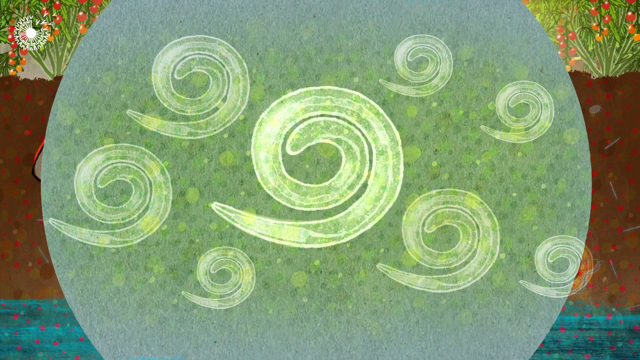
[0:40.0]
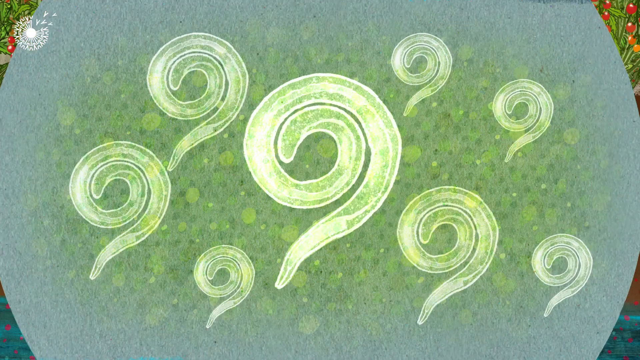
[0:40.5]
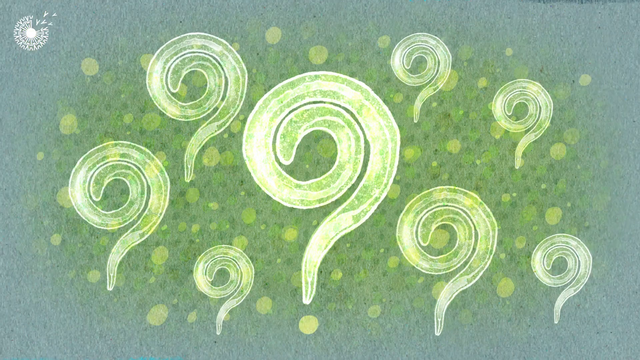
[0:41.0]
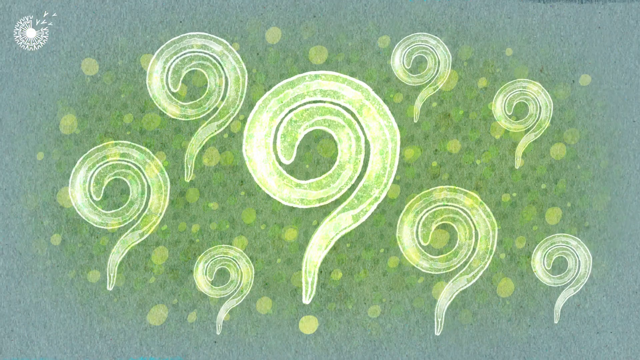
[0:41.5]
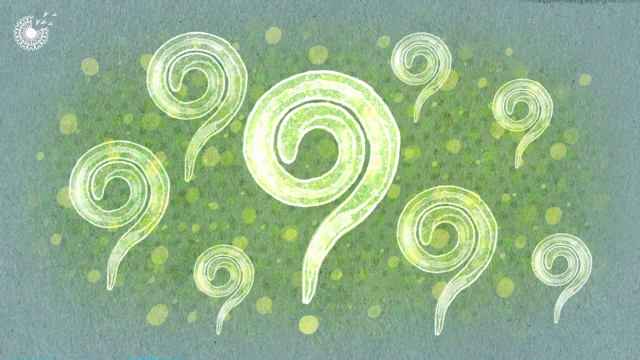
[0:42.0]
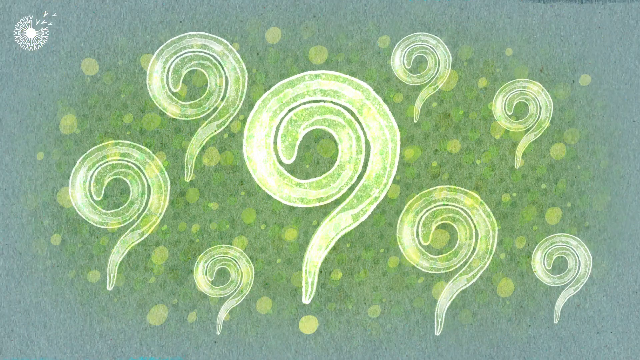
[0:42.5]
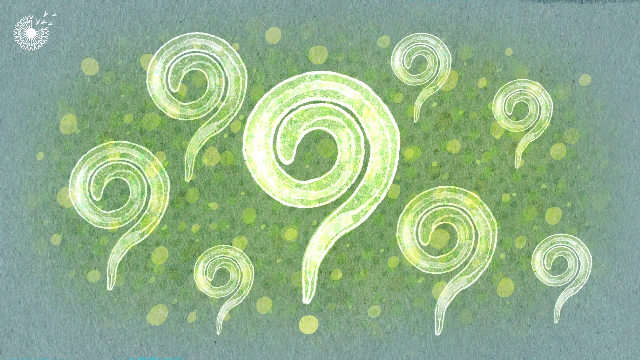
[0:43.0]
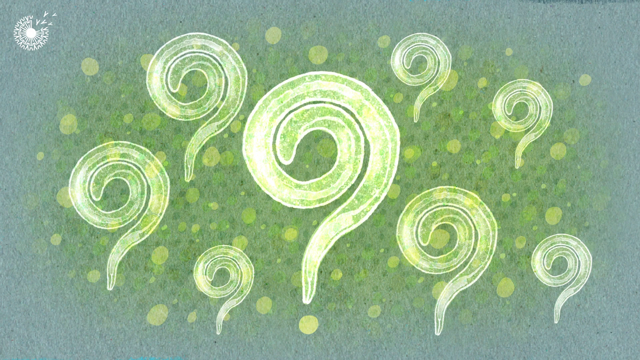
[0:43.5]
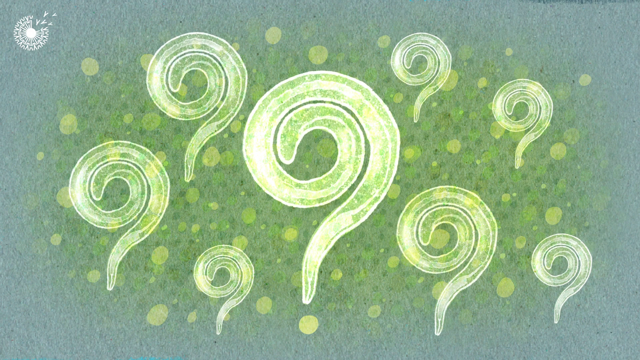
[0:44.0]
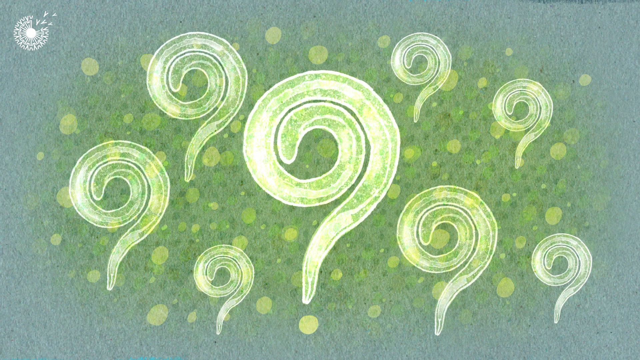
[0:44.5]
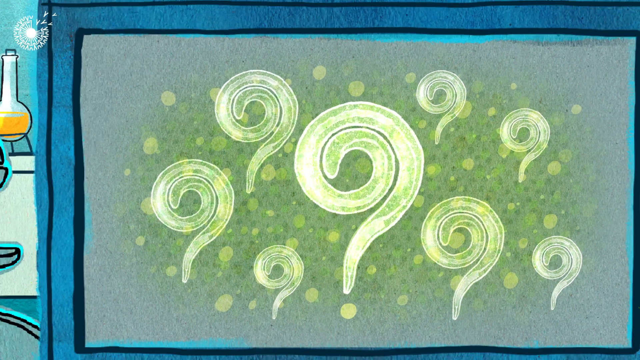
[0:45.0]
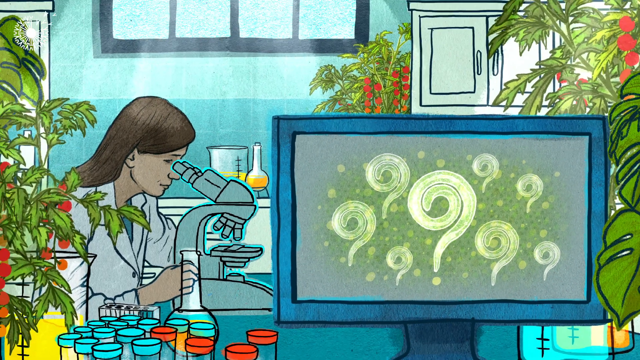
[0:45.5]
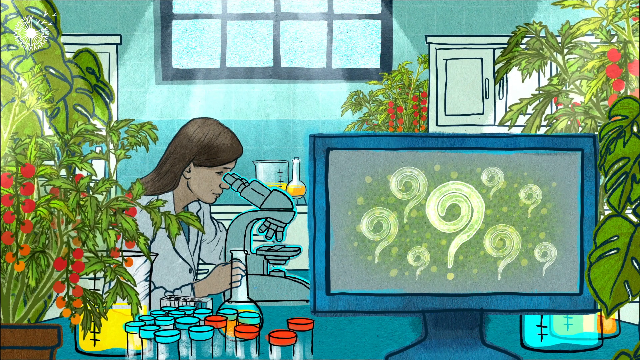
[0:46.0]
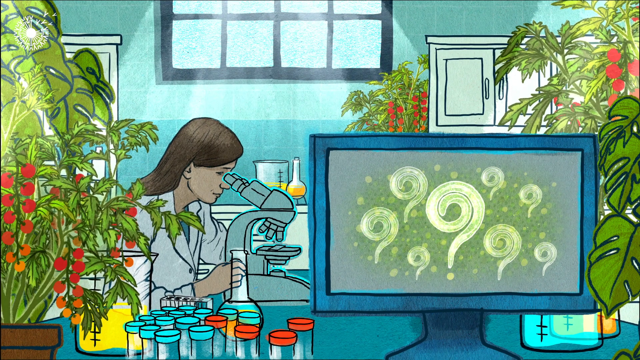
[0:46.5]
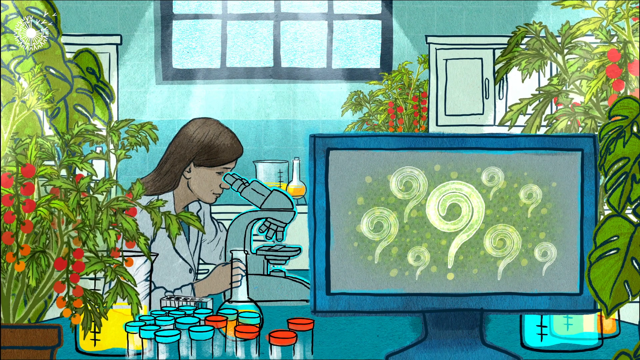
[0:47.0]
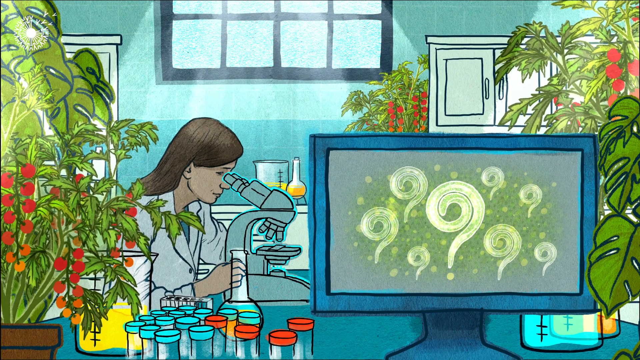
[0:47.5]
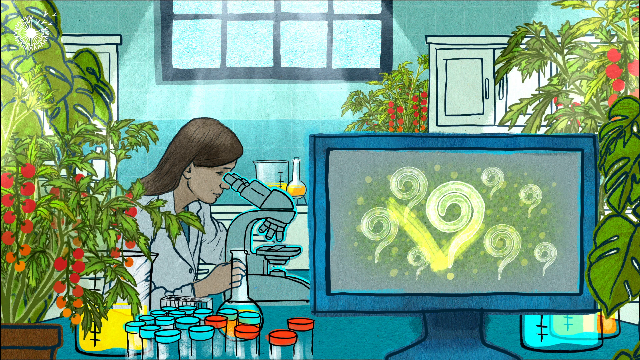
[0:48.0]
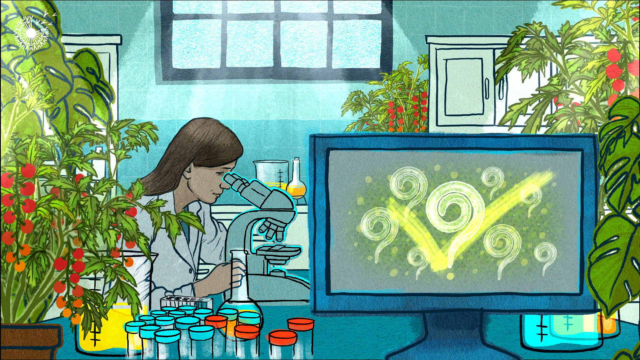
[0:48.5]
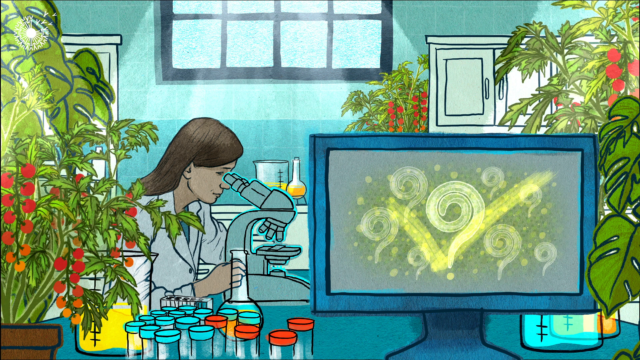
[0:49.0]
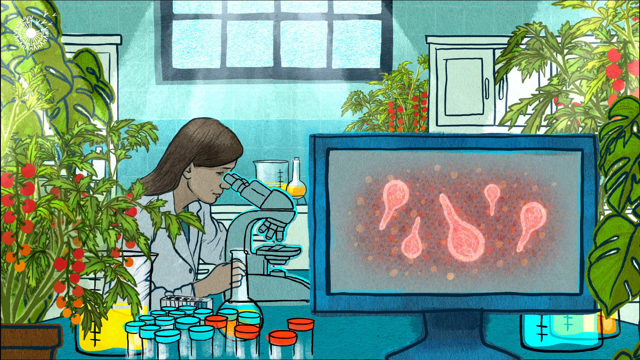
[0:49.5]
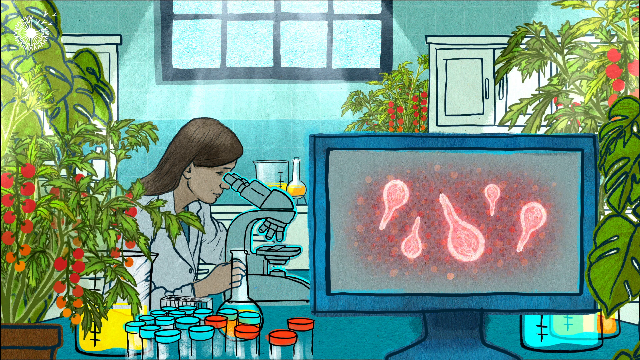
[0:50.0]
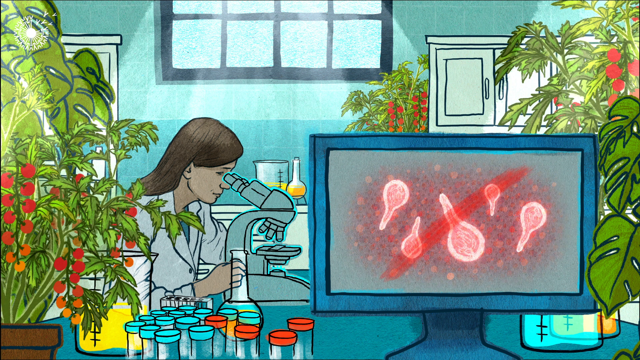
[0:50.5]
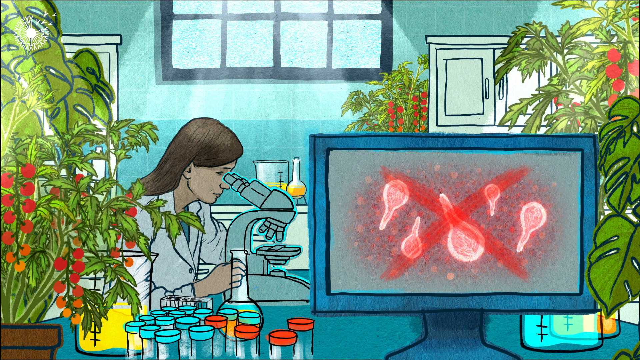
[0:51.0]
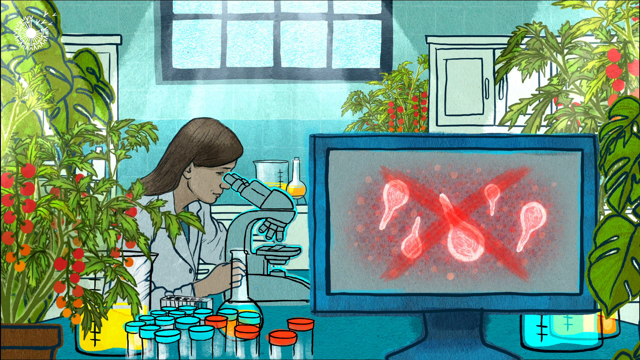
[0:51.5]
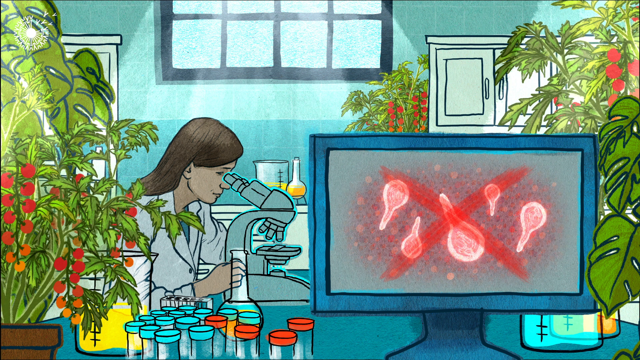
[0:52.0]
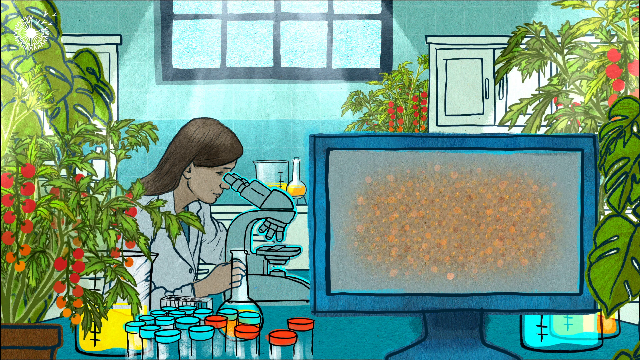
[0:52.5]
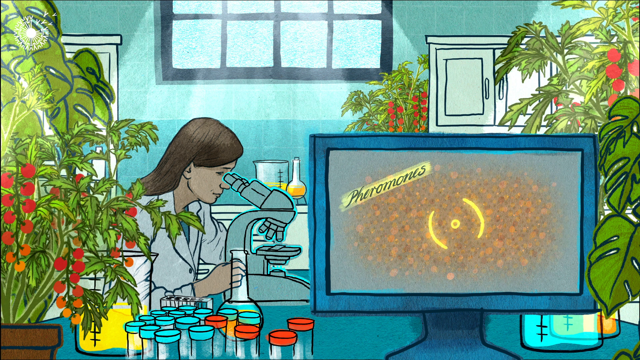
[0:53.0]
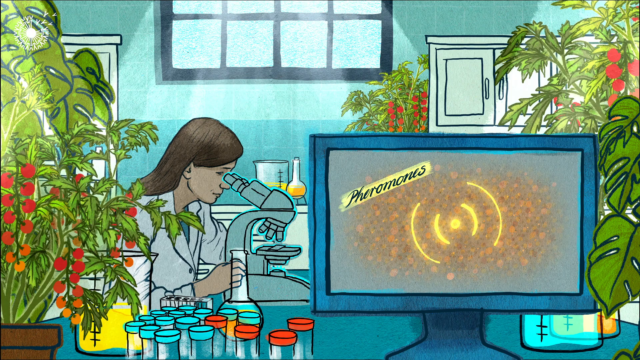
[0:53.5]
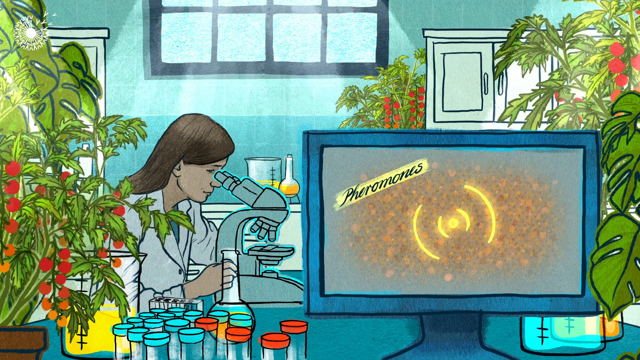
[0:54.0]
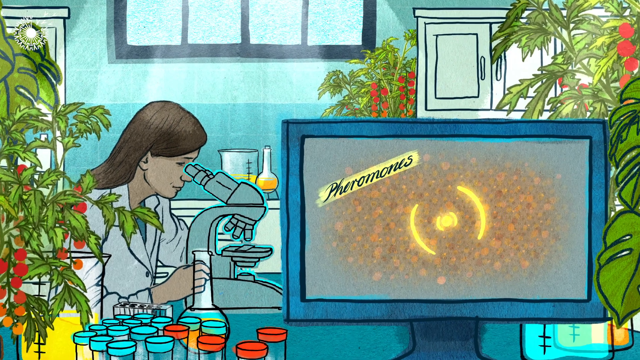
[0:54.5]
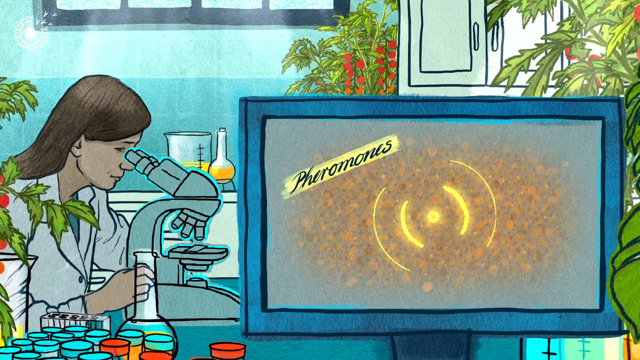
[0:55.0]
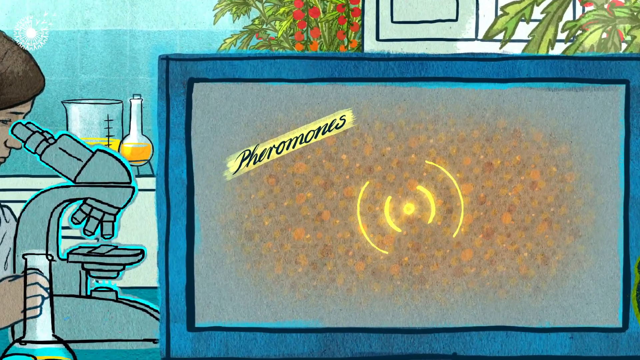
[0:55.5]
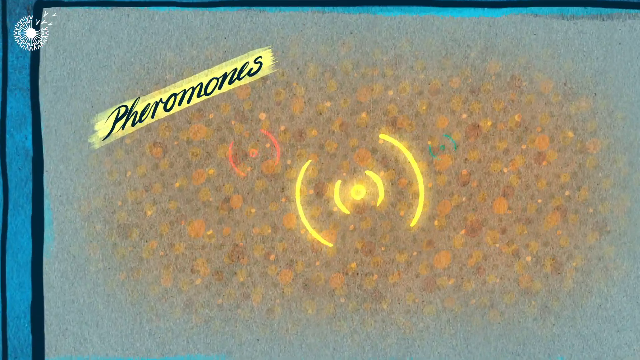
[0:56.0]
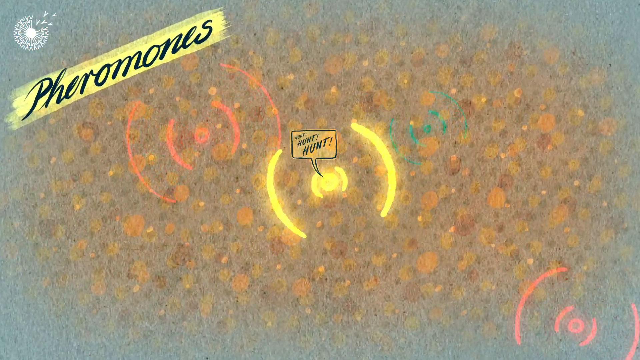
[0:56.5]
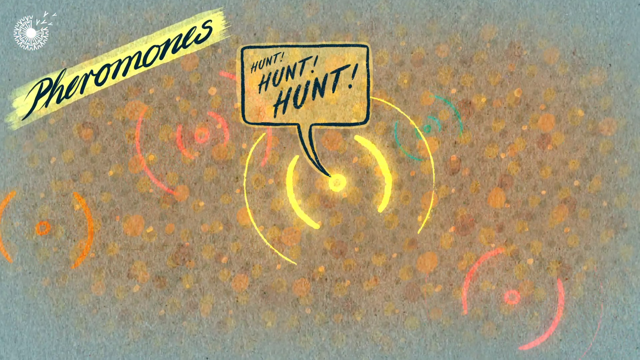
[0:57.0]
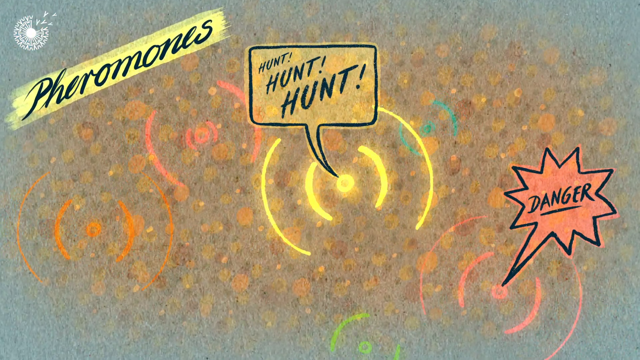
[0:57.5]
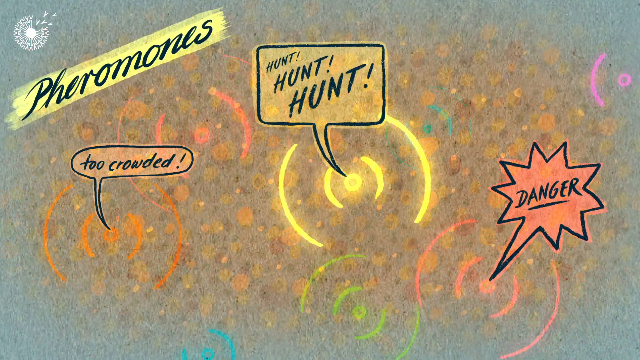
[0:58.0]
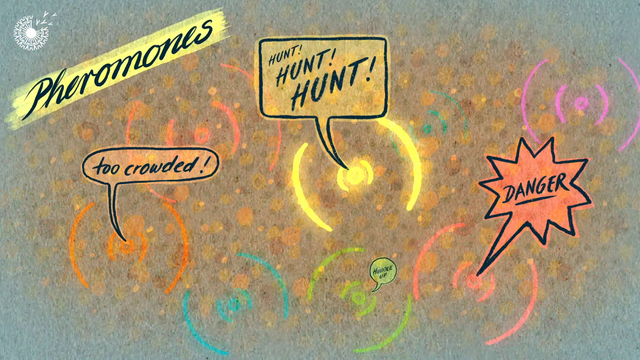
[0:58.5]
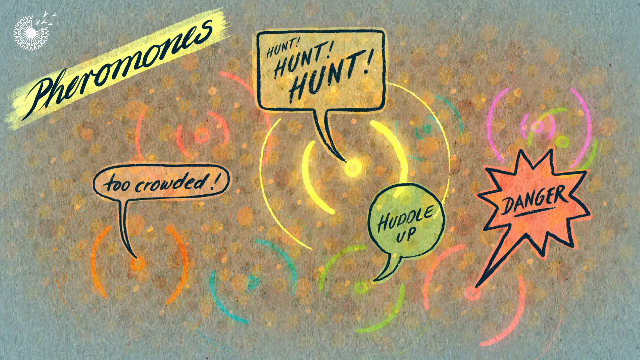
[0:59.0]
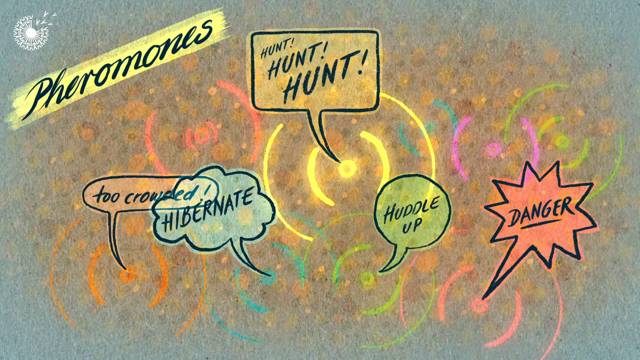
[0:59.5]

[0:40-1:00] An animated green circle expands over brown soil with red dots. Many green swirls of what look like little worms swirl clockwise from the middle outward, and the swirl ends in a little pointy tail to the left. It spreads out, and the worms all have their tails pointed downward, looking like question marks. The view zooms out and the green worms become part of a TV screen that moves out to the bottom right. On the left side, an animated scientist in the background, a woman, looks into a microscope. On the left and right sides there are many plants with cherry tomato vines coming down. At the bottom left, in front of the woman, are many test tubes with blue caps and red caps. A green check mark appears over the green swirly things on the LCD screen at the bottom right. Then the red bulb things appear, with a red mark and an X over them. The LCD screen reads "pheromones" in black text with a yellow highlight. A signal appears, like a circular yellow dot with a Wi-Fi signal coming out of it, and a dialogue box comes out of it reading "hunt, hunt, hunt." More text boxes follow: an orange one on the left reads "too crowded," a dark orange one on the right reads "danger," a green one reads "huddle up," and a blue one reads "hibernate."